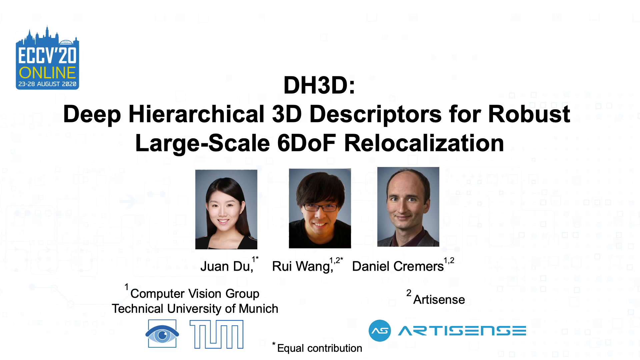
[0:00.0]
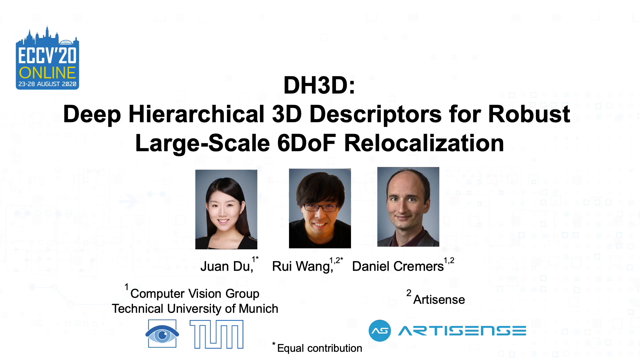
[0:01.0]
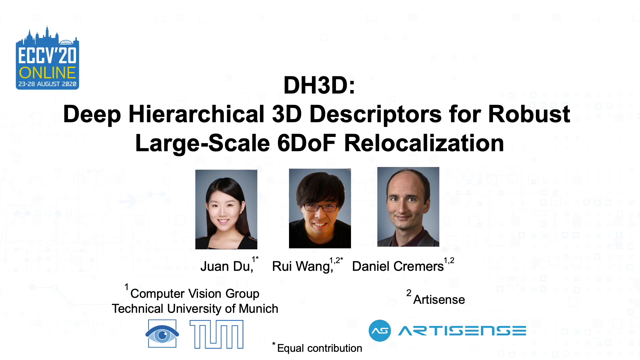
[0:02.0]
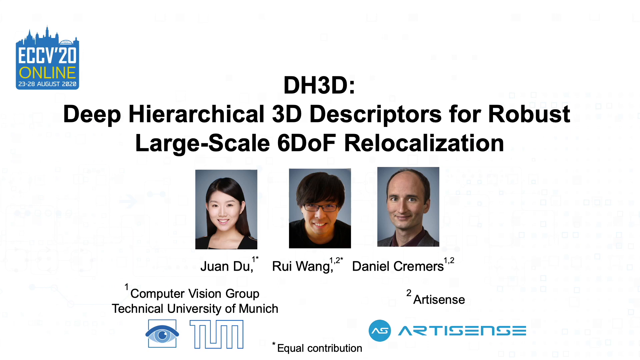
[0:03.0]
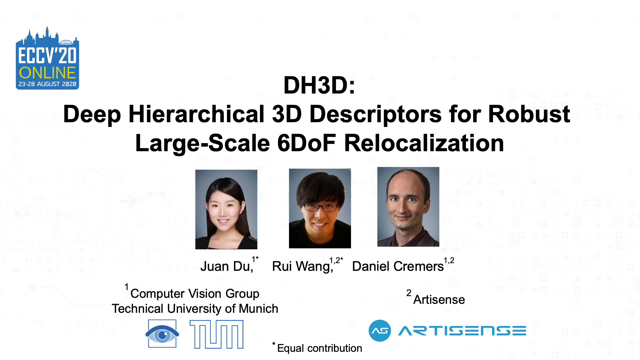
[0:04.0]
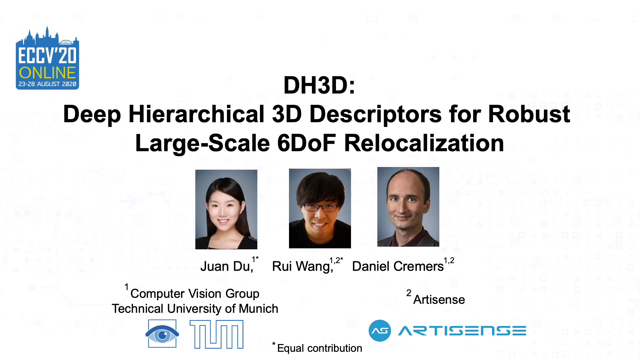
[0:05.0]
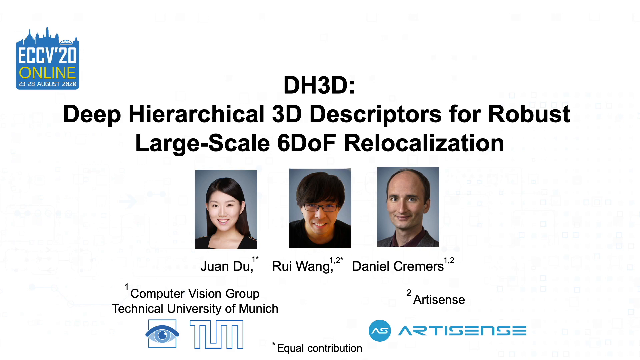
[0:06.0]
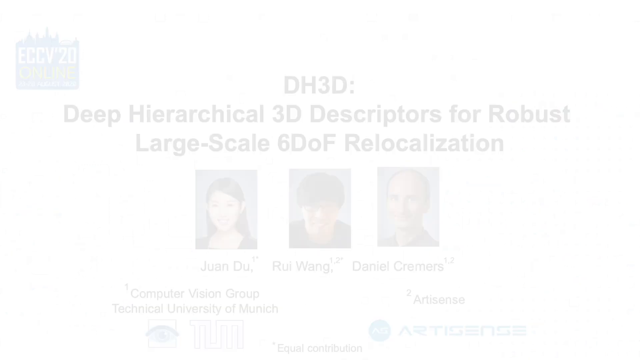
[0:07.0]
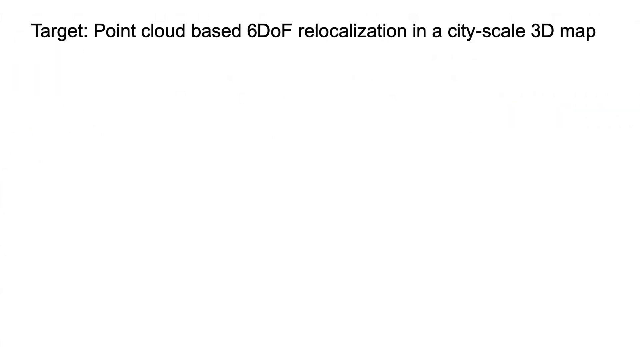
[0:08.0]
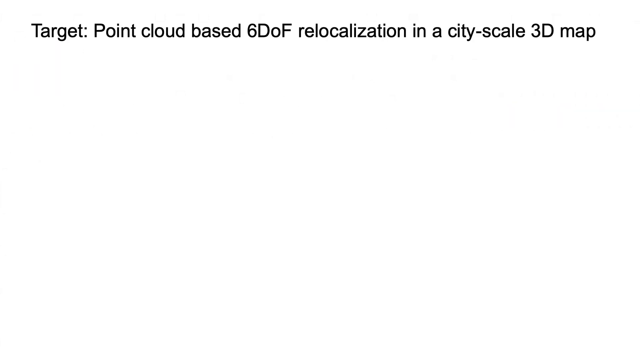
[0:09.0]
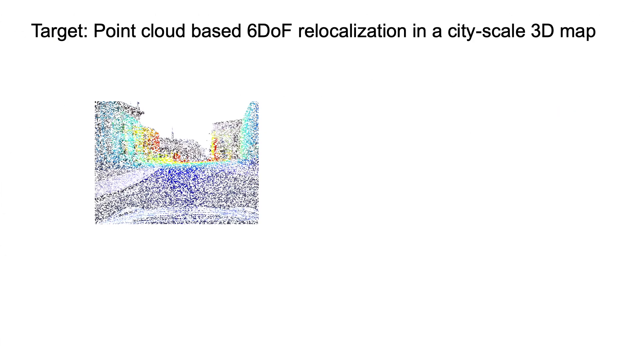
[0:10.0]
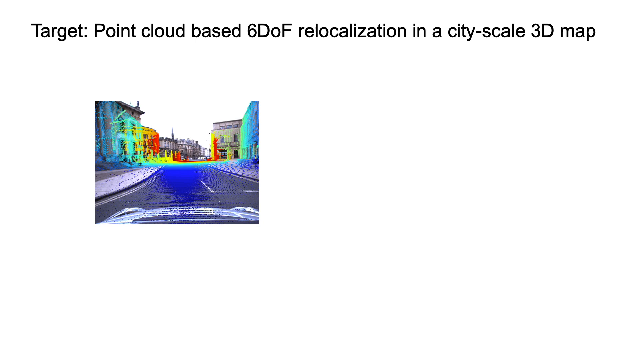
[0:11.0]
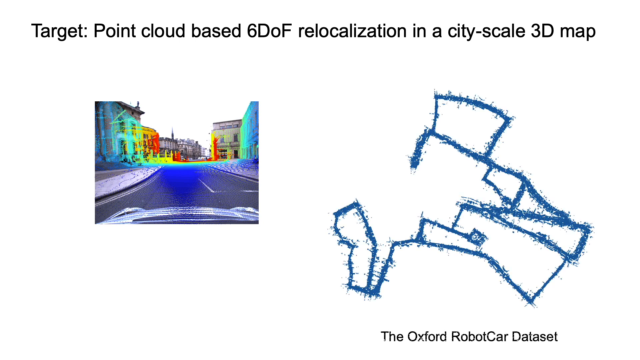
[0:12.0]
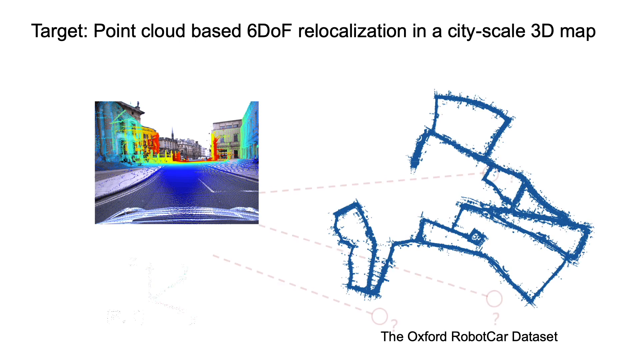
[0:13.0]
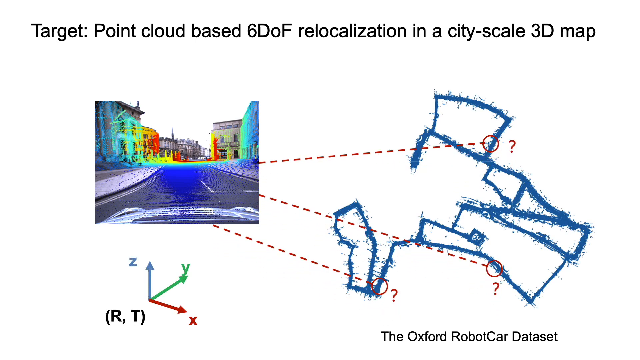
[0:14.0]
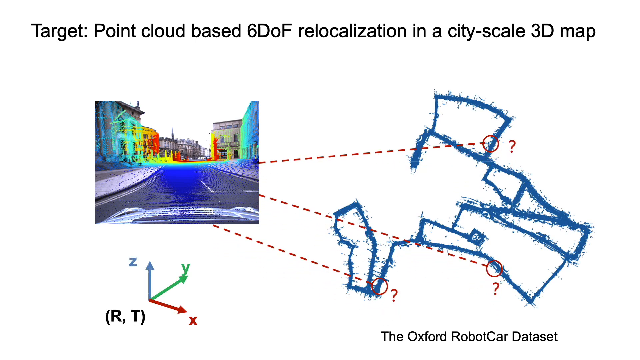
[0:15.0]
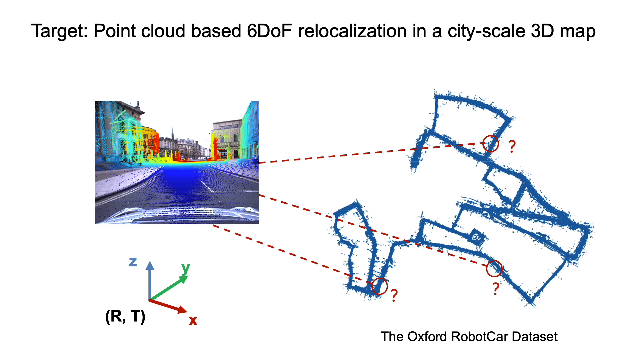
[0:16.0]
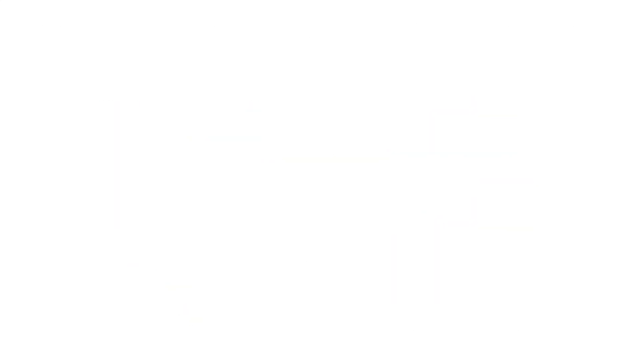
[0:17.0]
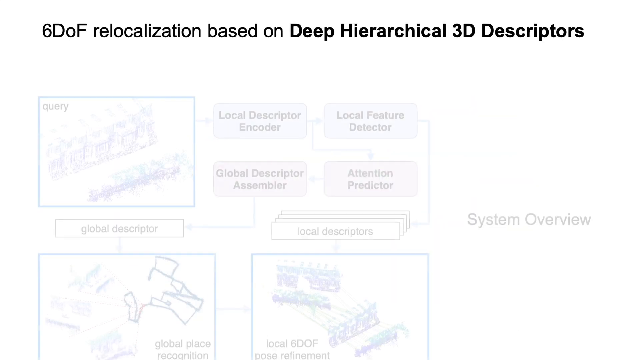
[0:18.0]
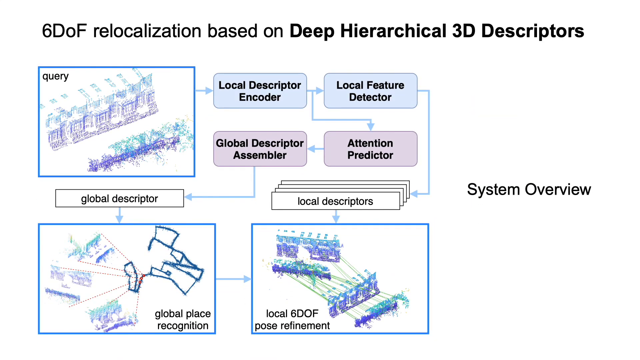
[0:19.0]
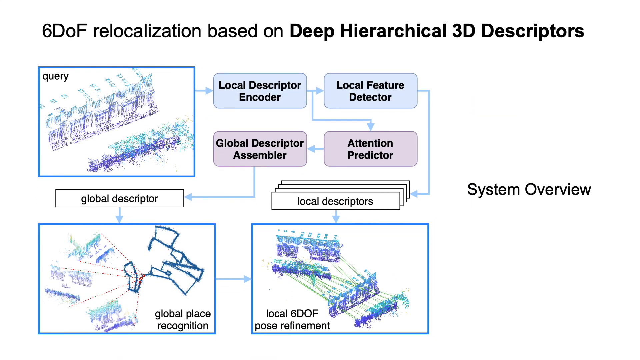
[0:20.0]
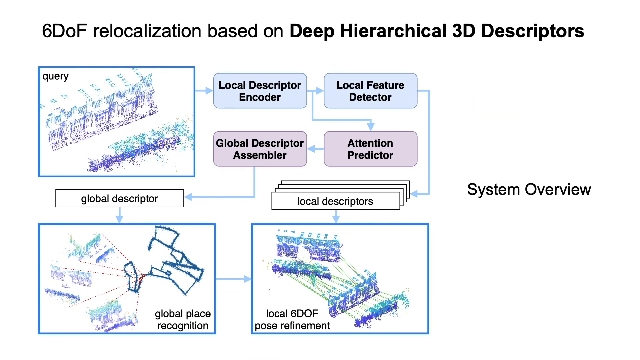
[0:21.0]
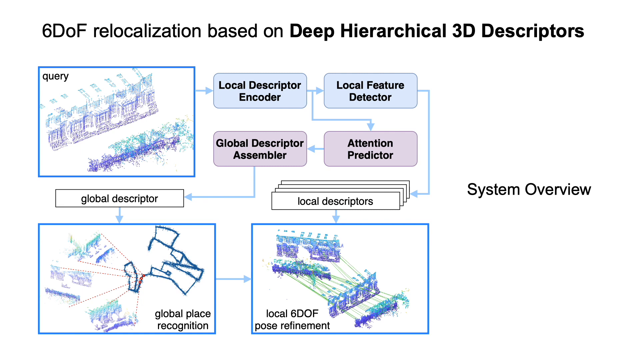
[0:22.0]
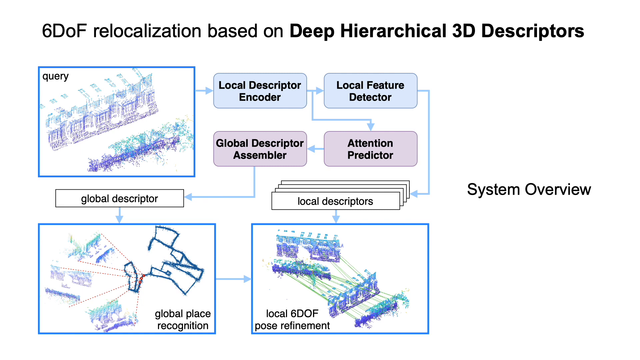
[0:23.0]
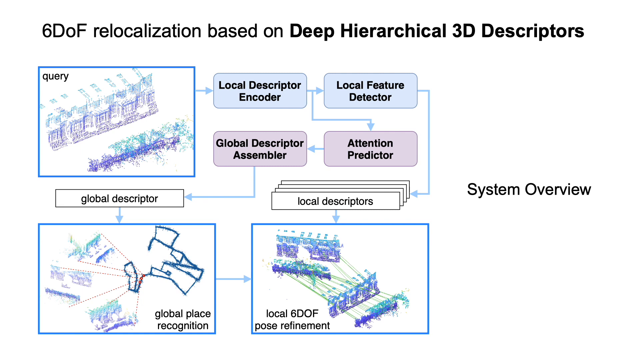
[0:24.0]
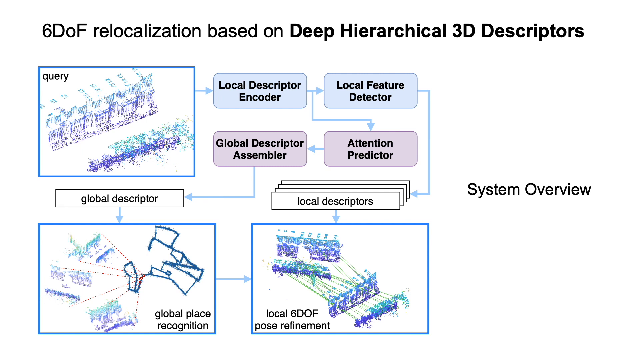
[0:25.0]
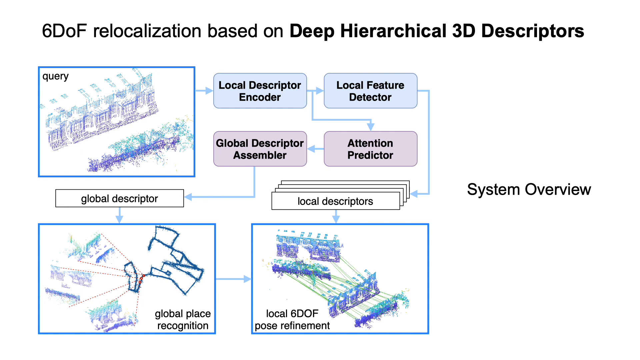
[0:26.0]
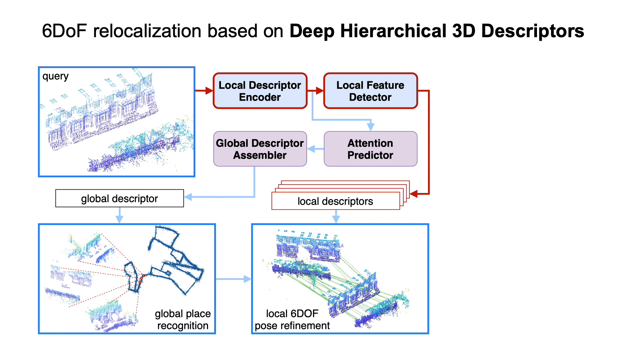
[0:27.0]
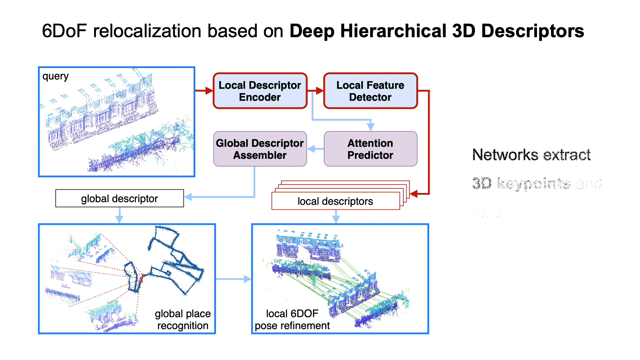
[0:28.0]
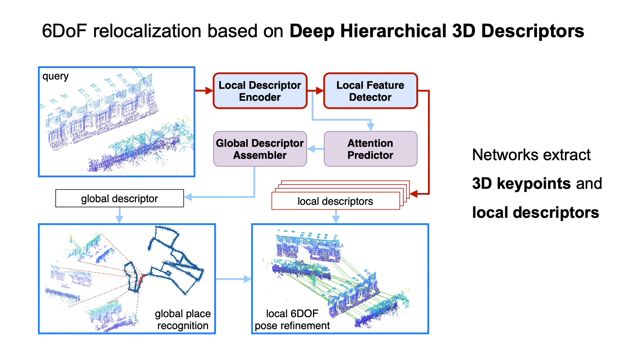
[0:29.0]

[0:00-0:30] The video opens with a title page reading "DH3D, Deep Hierarchical 3D Descriptors for Robust Large-Scale 6DOF Relocalization," with photographs of Xuan Du, Rui Wang and Daniel Kremers, from the Computer Vision Group, Technical University of Munich, and Artisense. A page headed "target point cloud based 6DOF relocalisation in a city scale 3D map" shows a picture of a city road and buildings, and a diagram from the Oxford robot car data set. Another page shows various 6DOF pictures making up a system overview, with local descriptor encoders, local feature detectors, attention predictors, global descriptor assemblers and local descriptors. The graph shows different queries, a box for global place recognition and another box for local 6DOF pose refinement. In blue outlines, arrows run from the query boxes to the local descriptor encoder, then to the local feature detector, then to the local descriptors, which lead to the local 6DOF pose refinement. Text reads "The networks extract 3D keypoints and local descriptors."